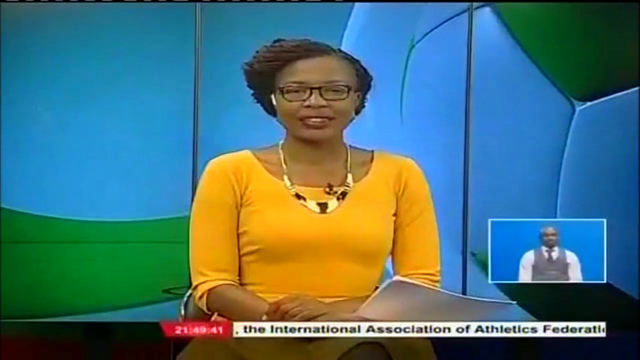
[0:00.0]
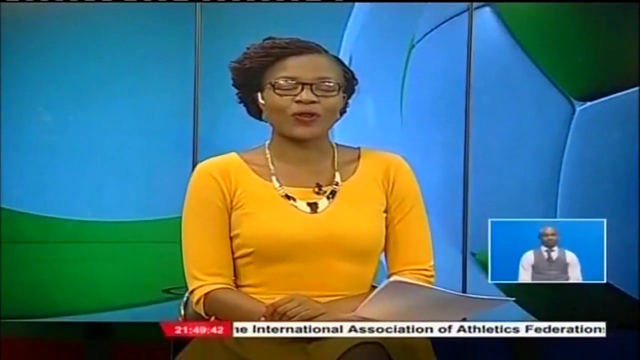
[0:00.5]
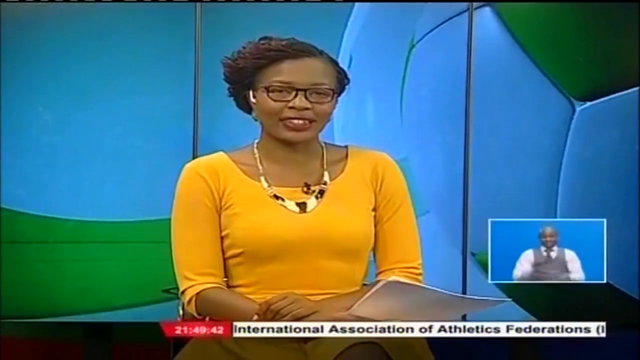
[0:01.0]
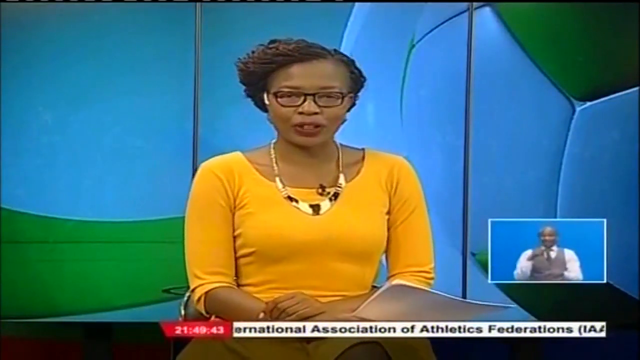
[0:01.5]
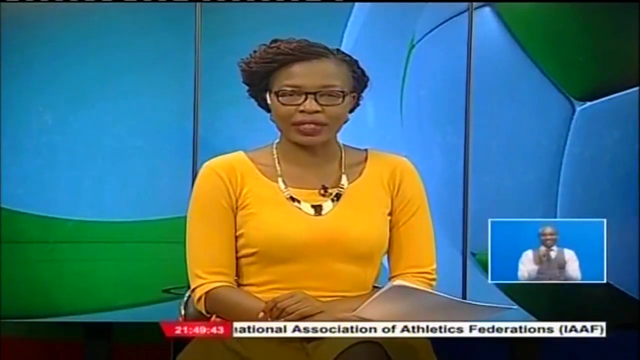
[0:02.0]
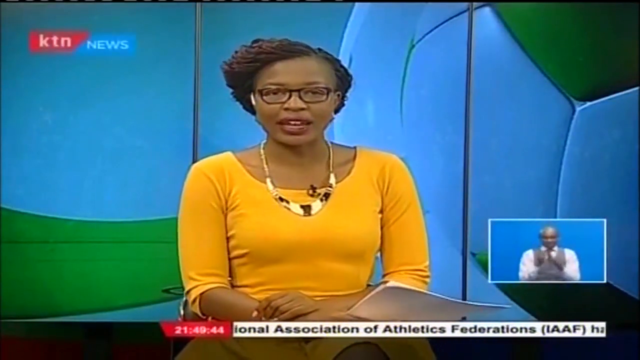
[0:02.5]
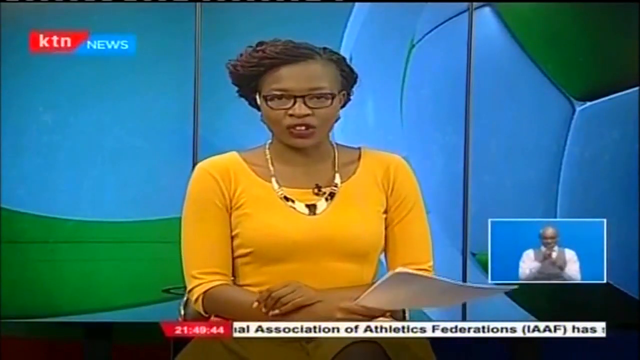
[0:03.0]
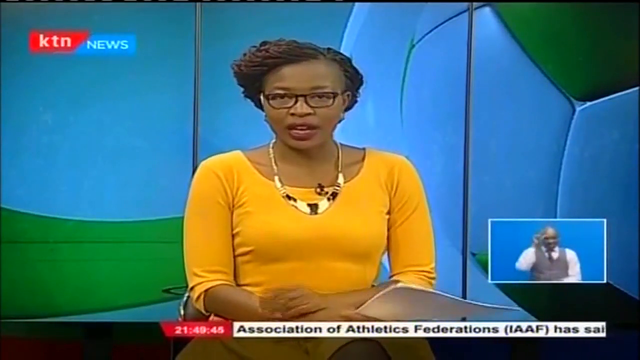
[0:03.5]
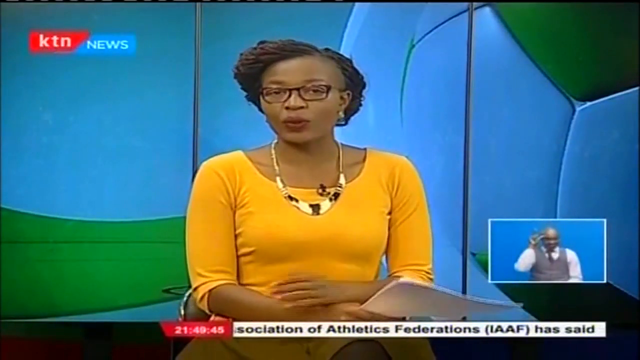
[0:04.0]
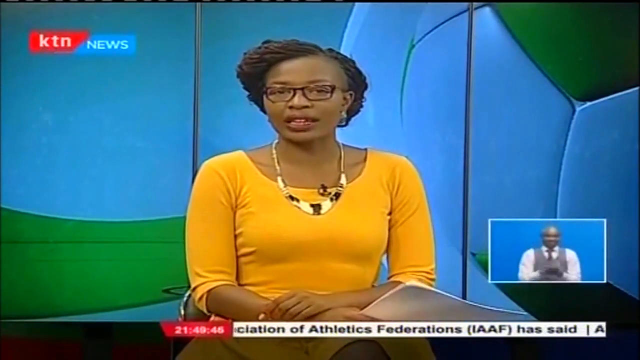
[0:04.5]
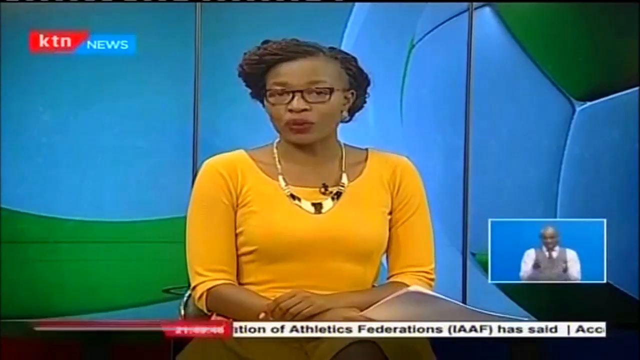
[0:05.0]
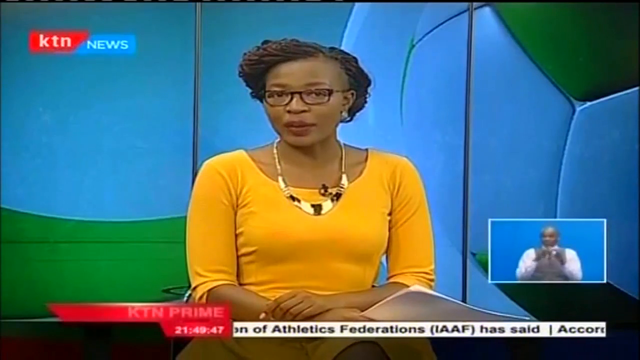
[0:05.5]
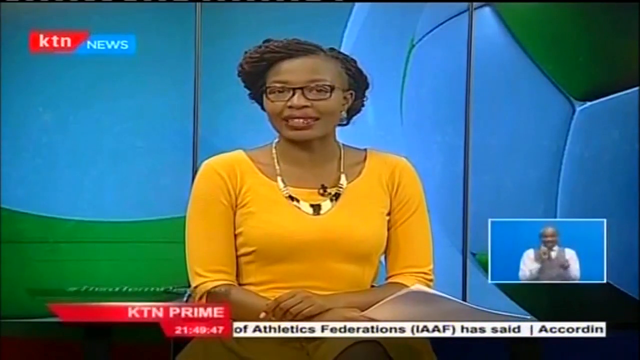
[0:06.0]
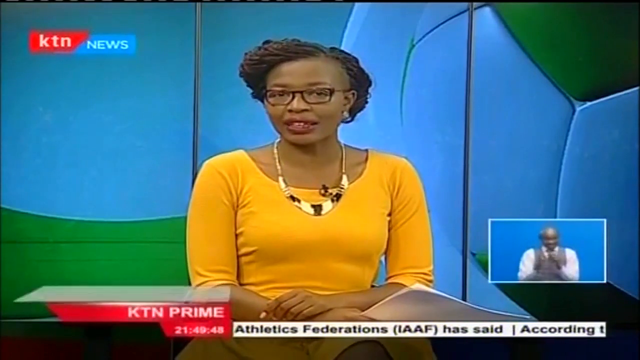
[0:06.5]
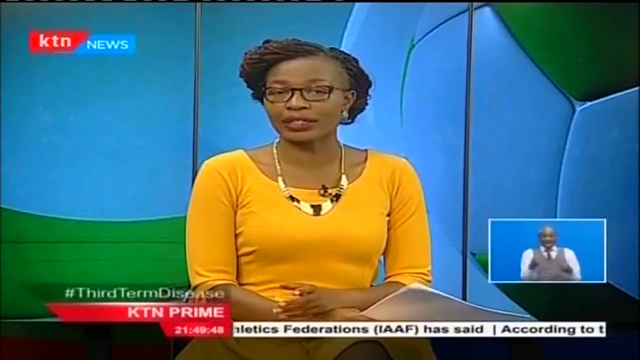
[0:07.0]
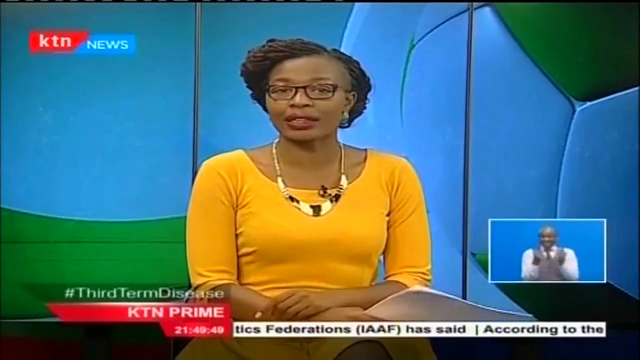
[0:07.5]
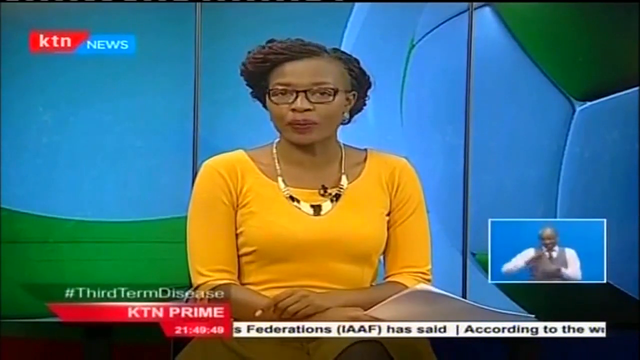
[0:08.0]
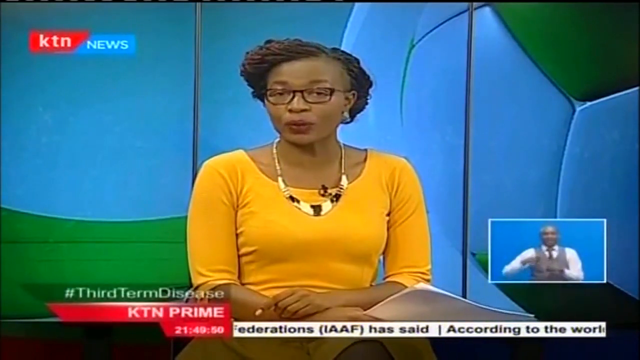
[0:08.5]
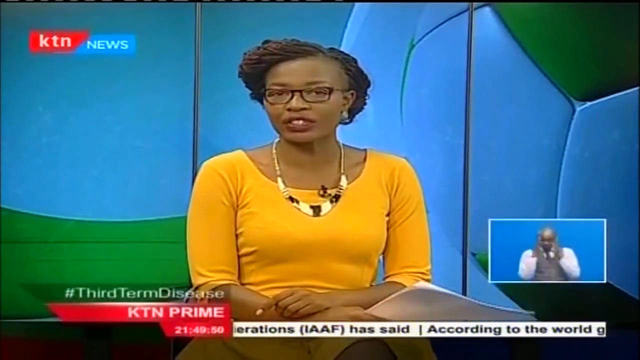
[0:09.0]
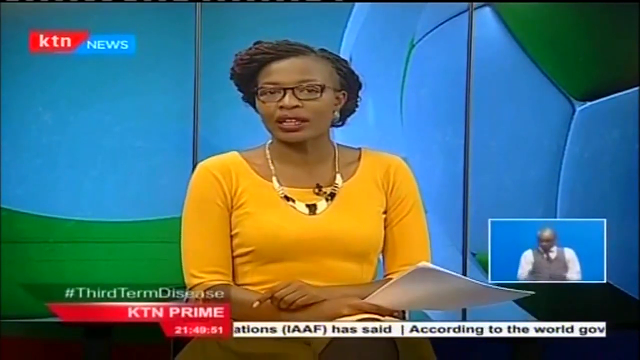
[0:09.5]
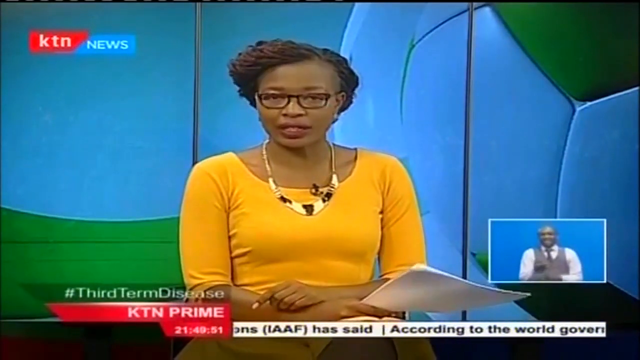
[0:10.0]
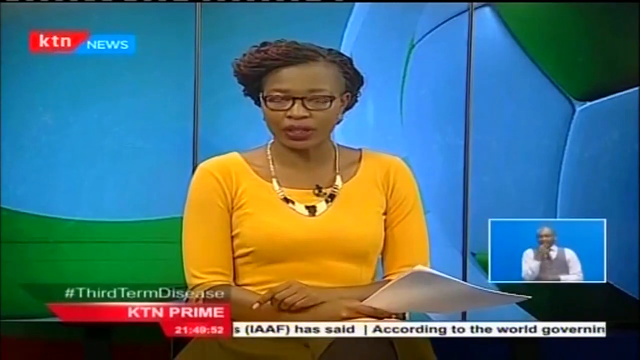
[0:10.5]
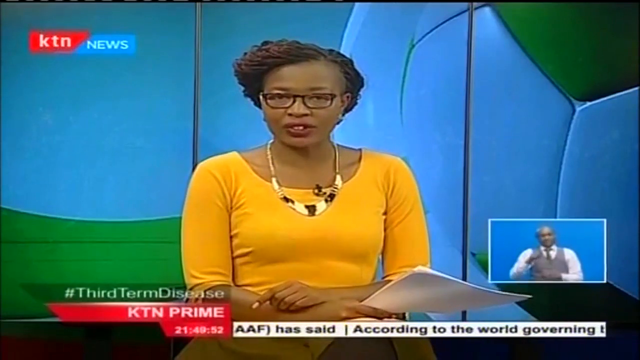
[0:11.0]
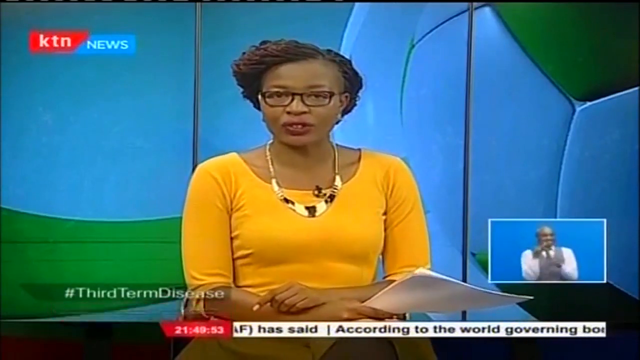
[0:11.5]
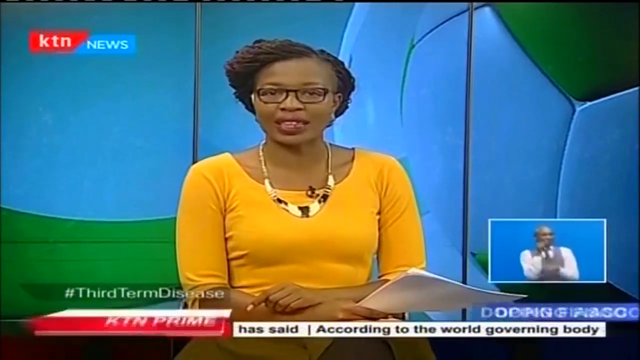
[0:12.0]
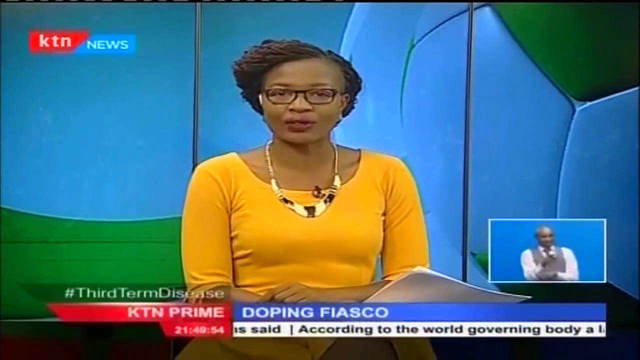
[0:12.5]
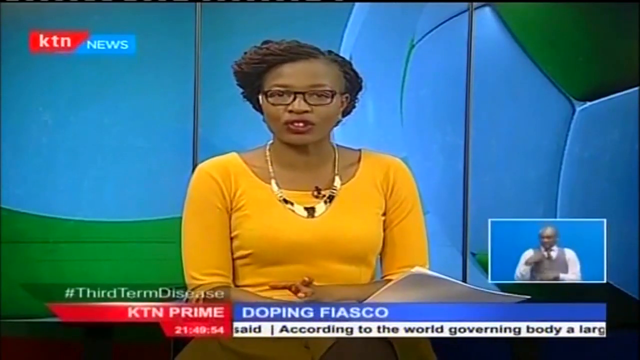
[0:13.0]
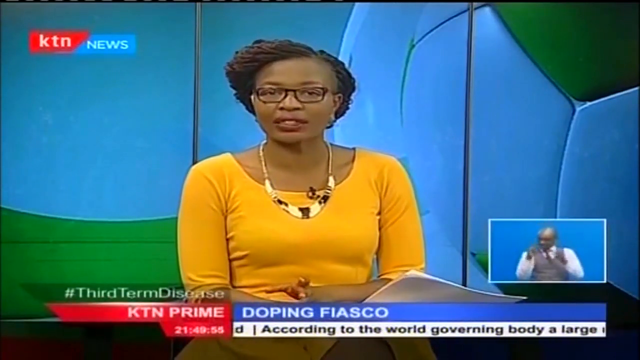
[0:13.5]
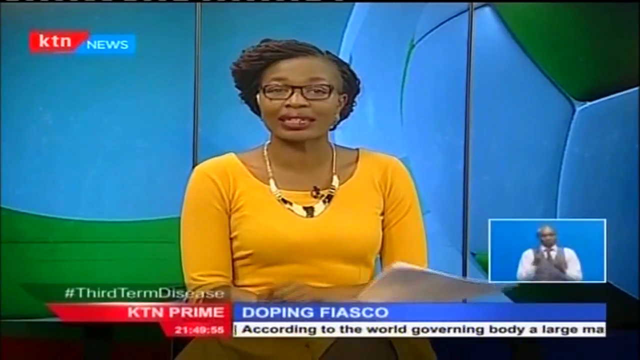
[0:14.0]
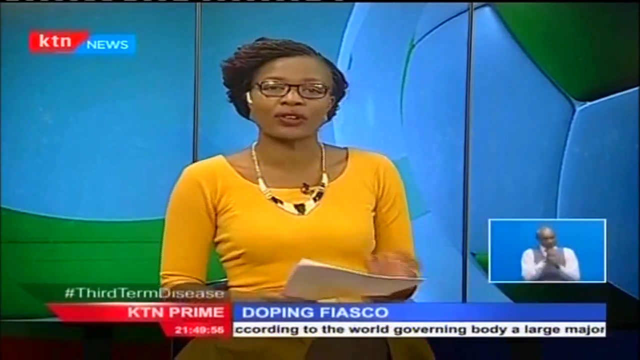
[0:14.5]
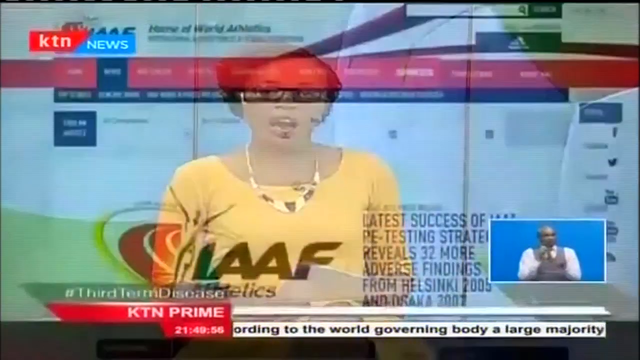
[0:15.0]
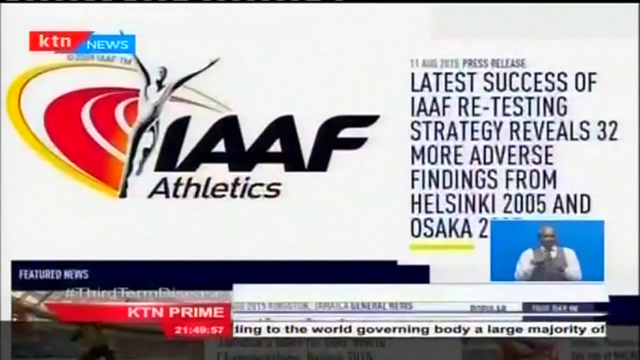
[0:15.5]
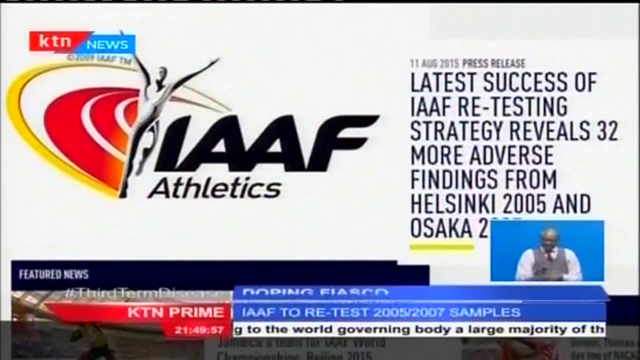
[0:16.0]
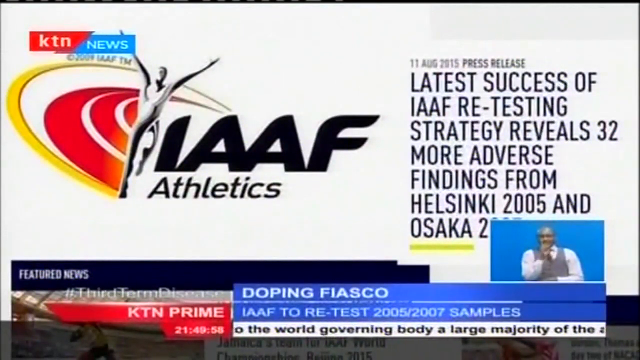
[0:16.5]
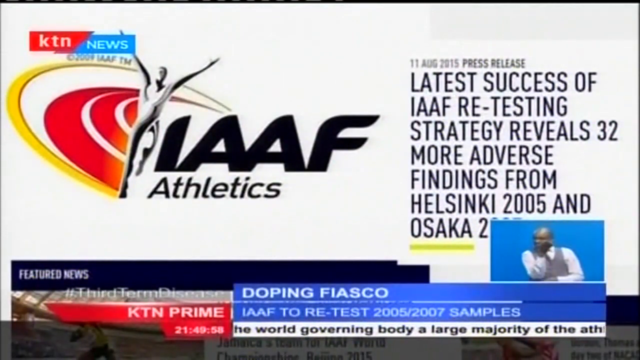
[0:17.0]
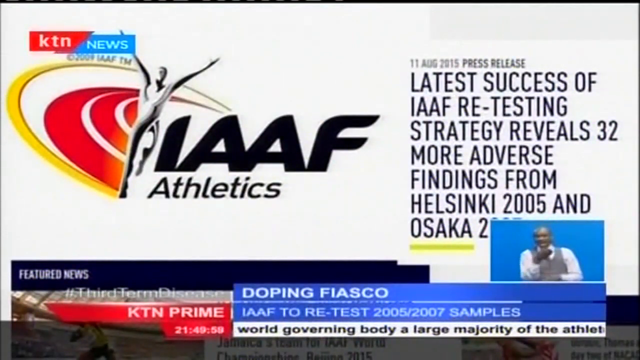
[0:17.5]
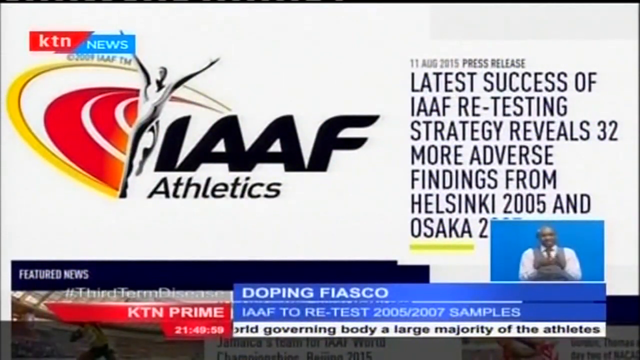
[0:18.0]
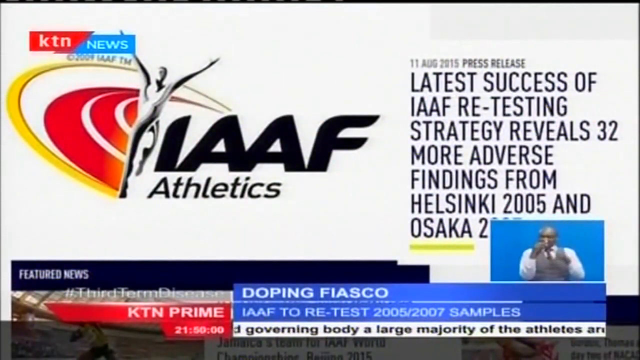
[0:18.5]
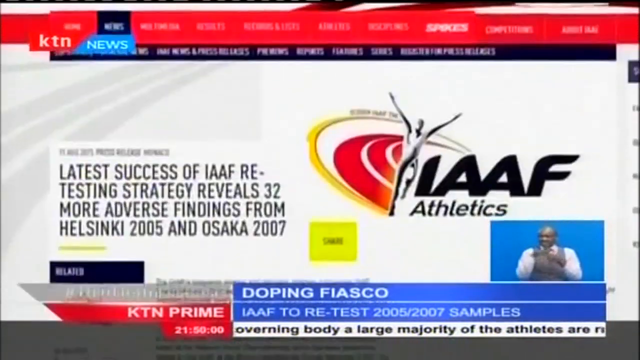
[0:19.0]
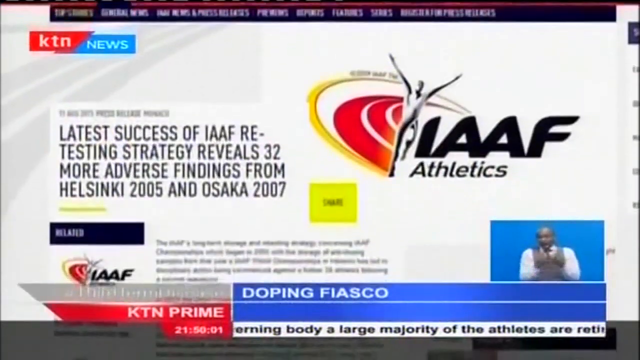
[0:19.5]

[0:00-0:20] A male sign-language interpreter appears as the news opens on a KTN news screen, labeled "KTN". On-screen text mentions the world governing body and athletes who are retired. The male sign-language interpreter interprets, signing with his hands. A female presenter holds a paper in her hand, a big picture print. Text referring to the IAAF and the success of a re-testing strategy appears, mentioning 32 athletes' findings. Nothing else is displayed on the screen.